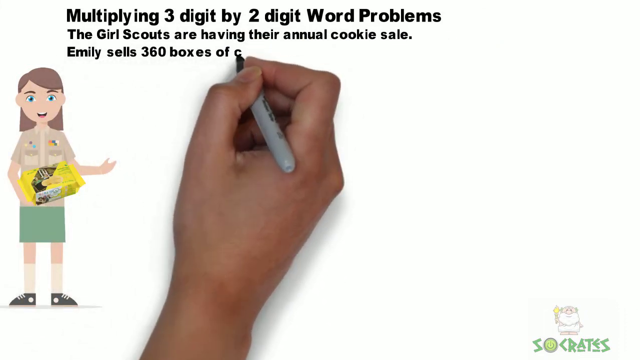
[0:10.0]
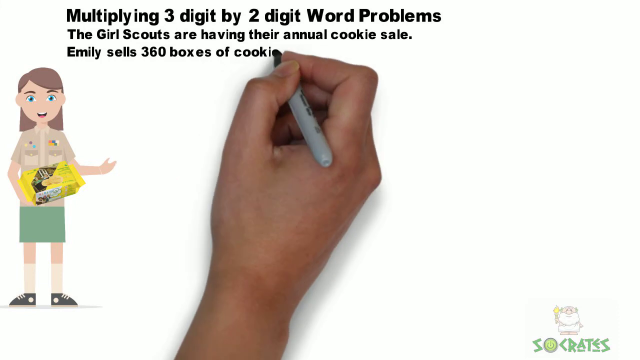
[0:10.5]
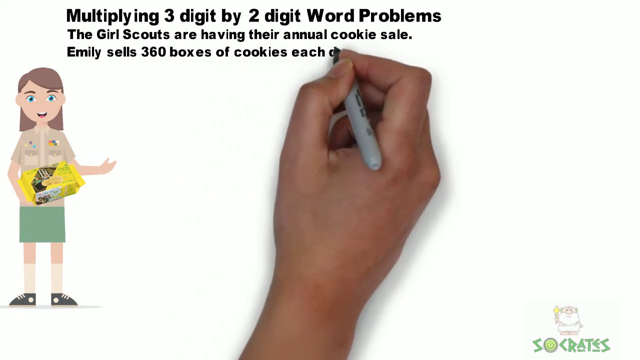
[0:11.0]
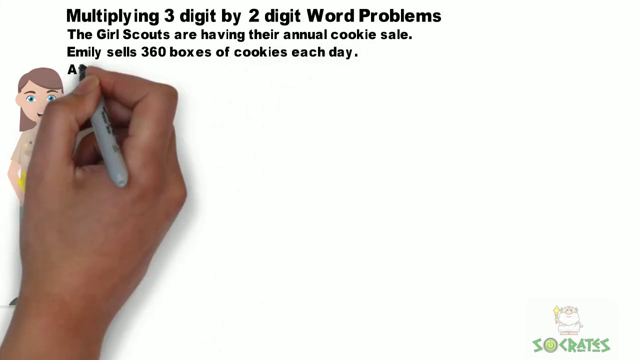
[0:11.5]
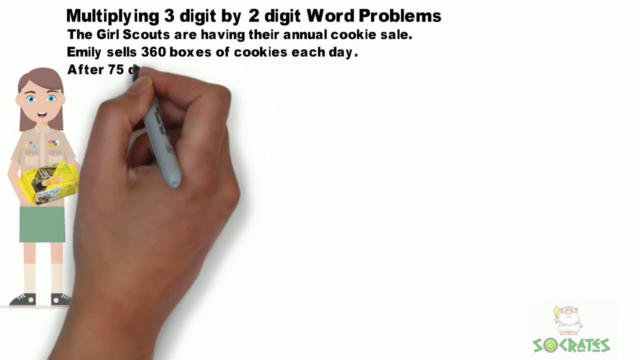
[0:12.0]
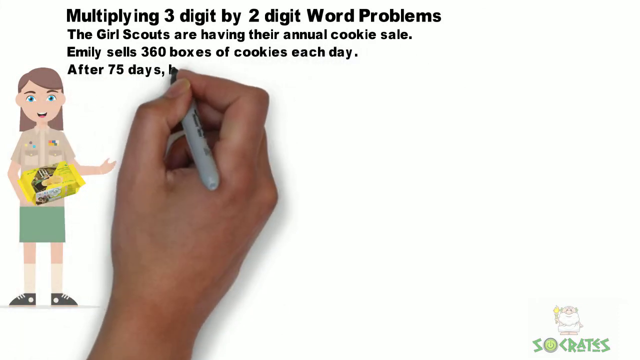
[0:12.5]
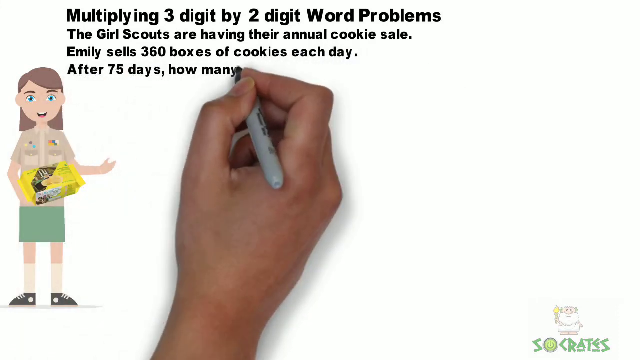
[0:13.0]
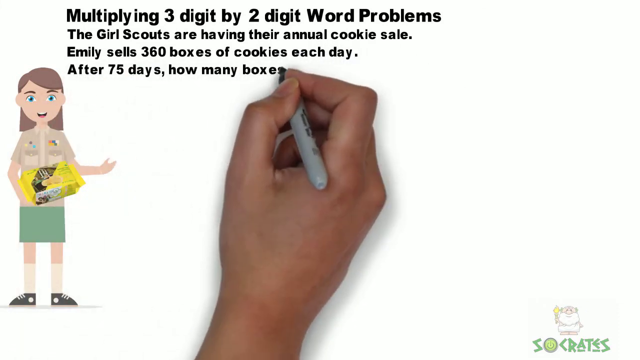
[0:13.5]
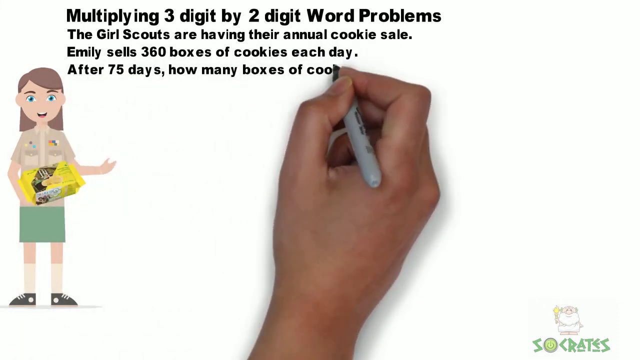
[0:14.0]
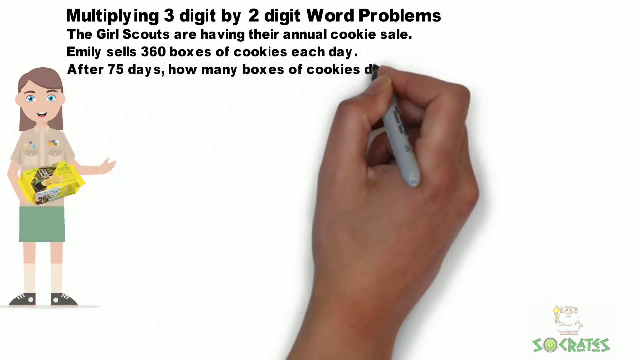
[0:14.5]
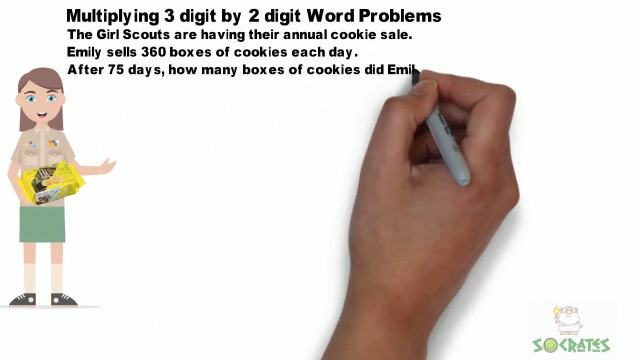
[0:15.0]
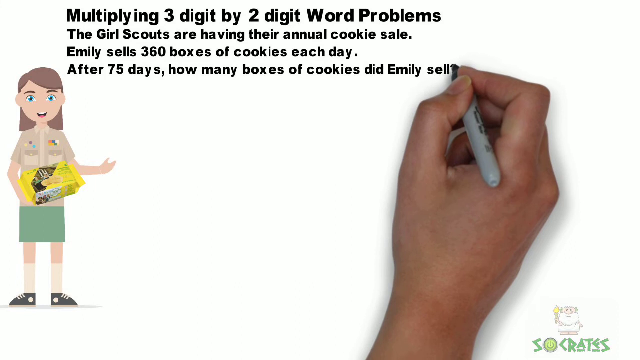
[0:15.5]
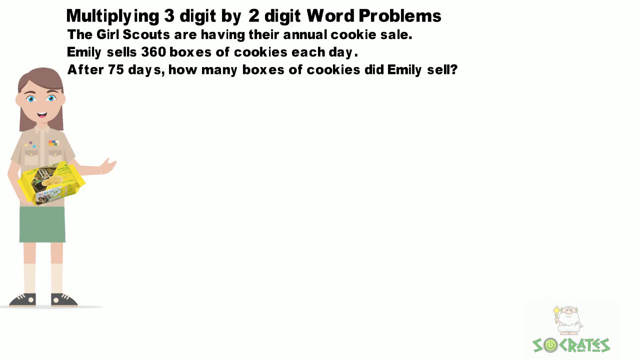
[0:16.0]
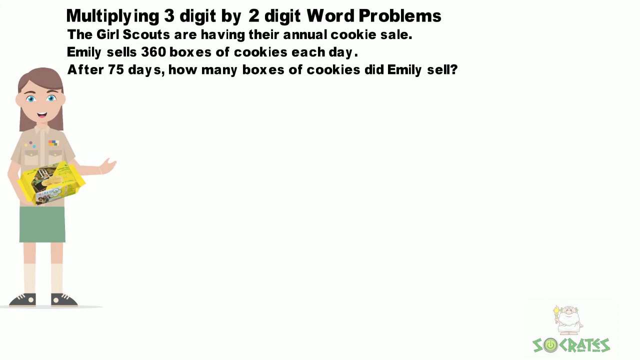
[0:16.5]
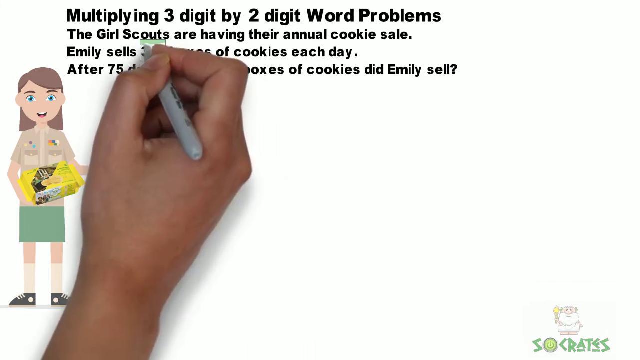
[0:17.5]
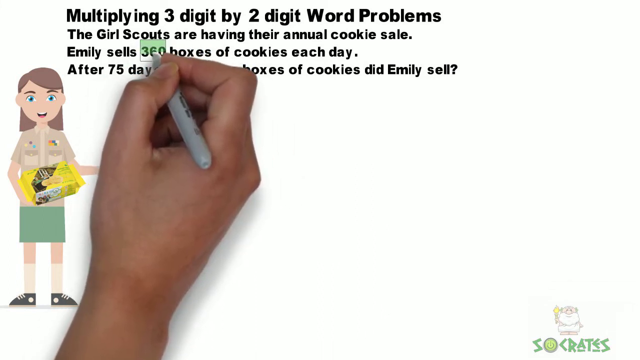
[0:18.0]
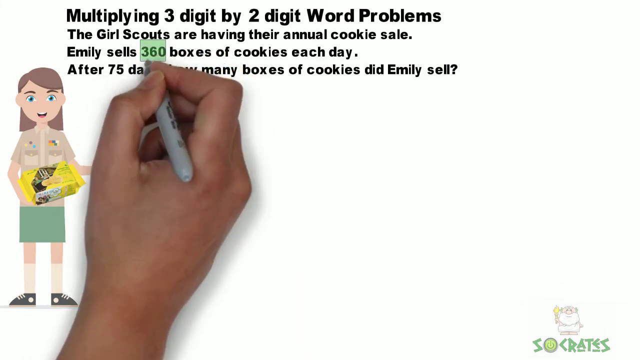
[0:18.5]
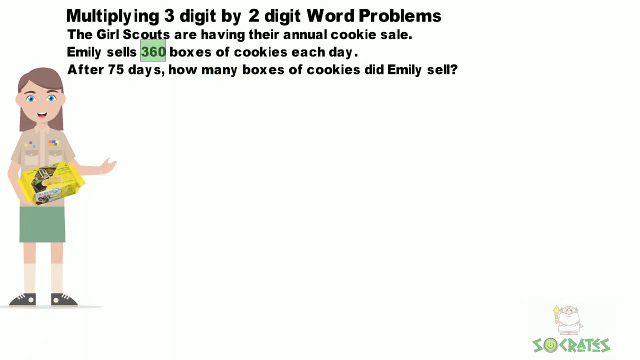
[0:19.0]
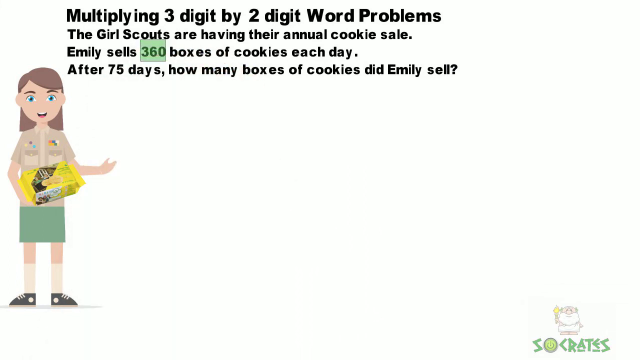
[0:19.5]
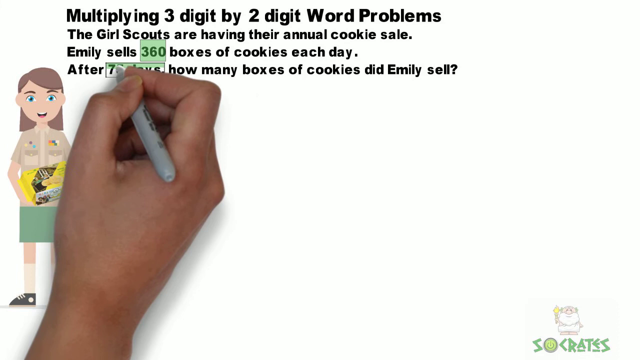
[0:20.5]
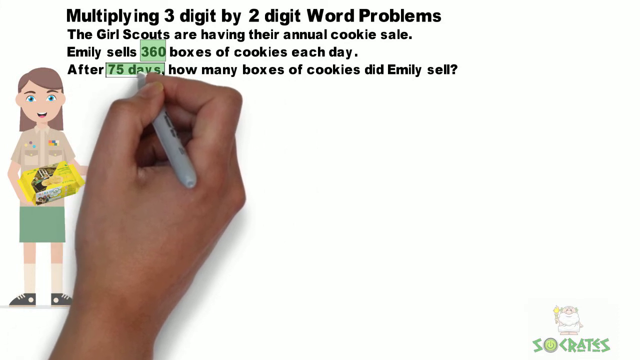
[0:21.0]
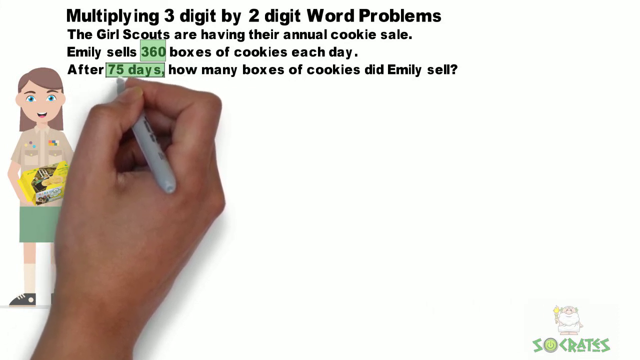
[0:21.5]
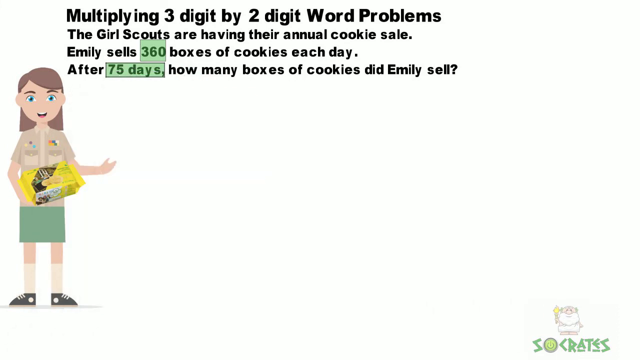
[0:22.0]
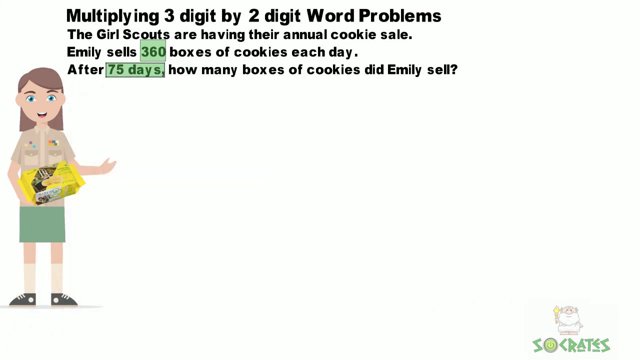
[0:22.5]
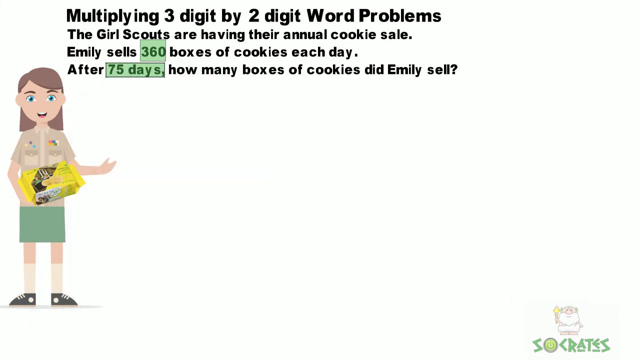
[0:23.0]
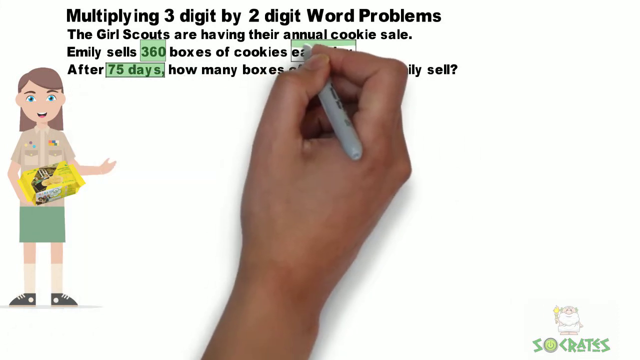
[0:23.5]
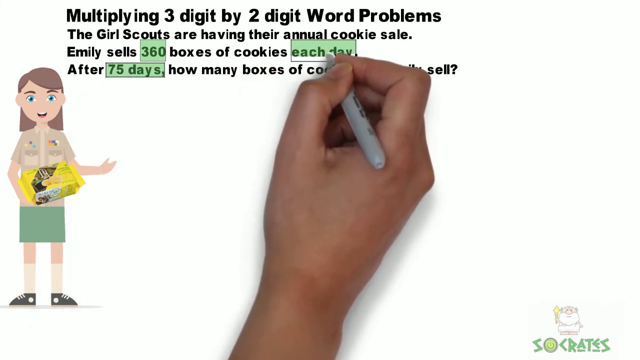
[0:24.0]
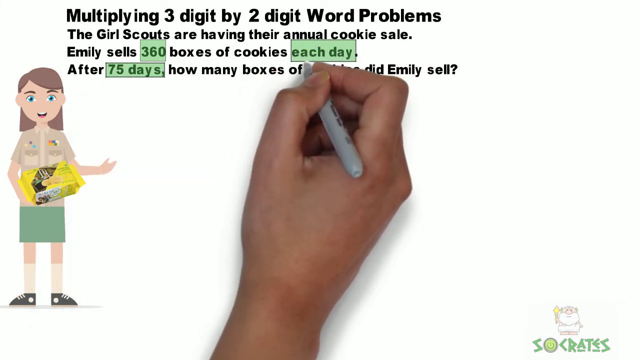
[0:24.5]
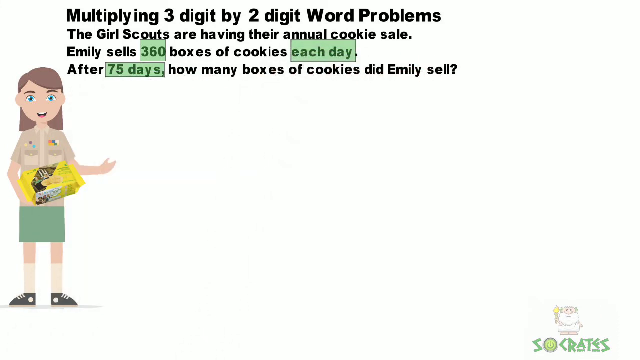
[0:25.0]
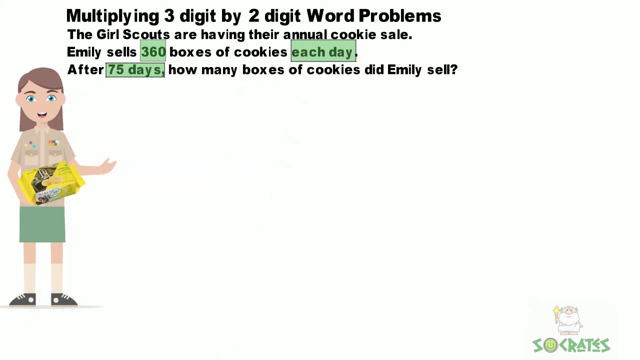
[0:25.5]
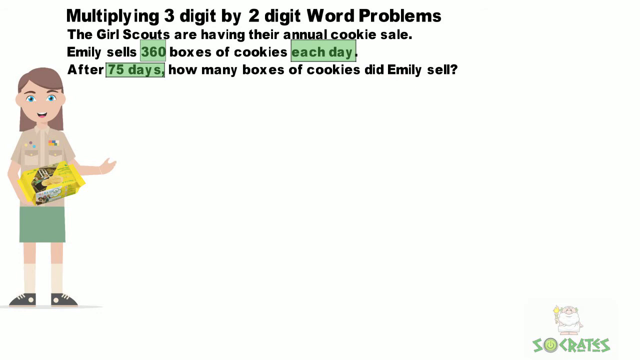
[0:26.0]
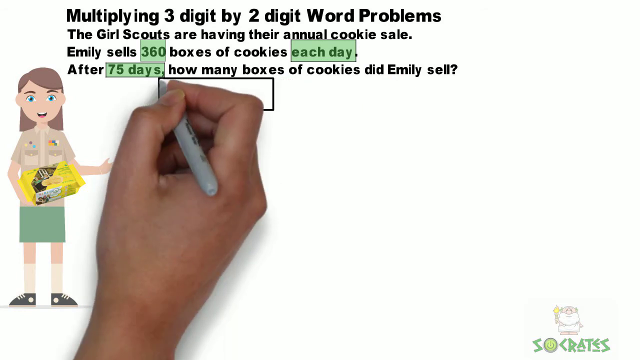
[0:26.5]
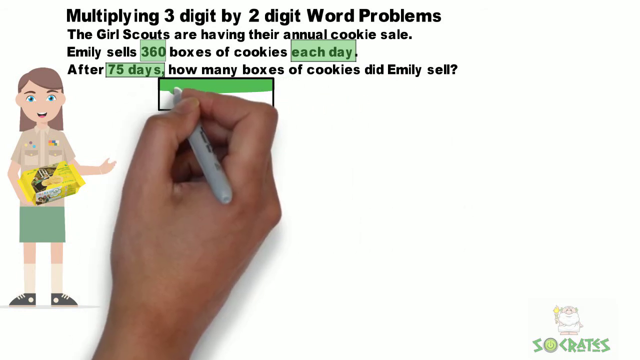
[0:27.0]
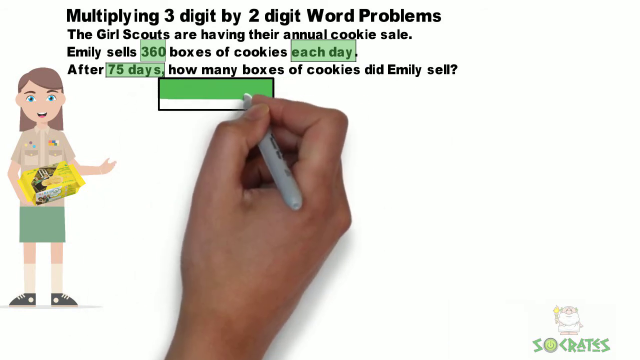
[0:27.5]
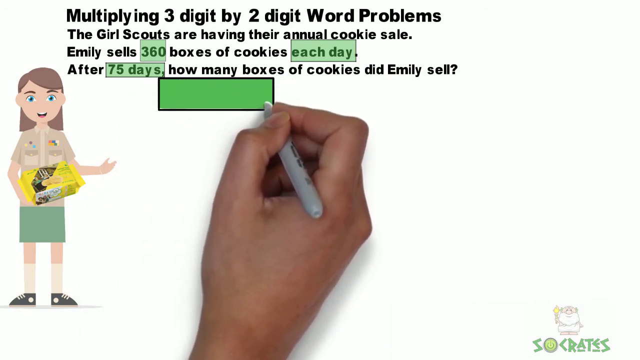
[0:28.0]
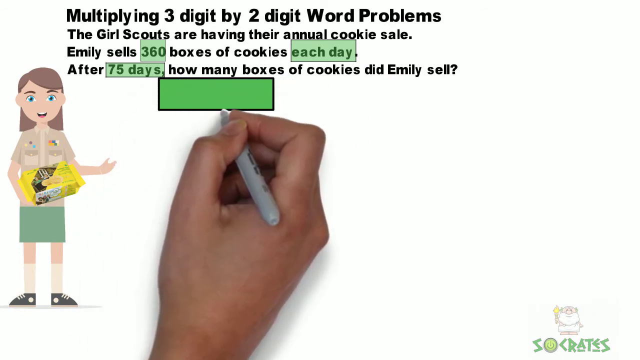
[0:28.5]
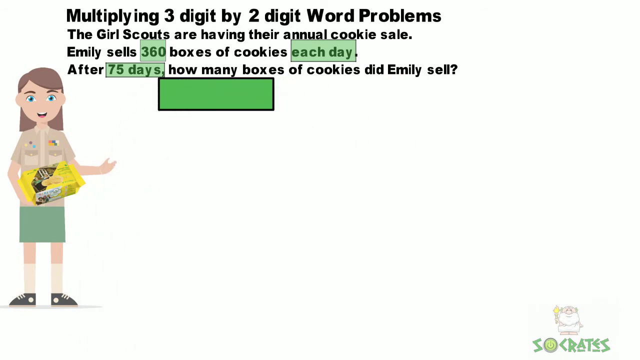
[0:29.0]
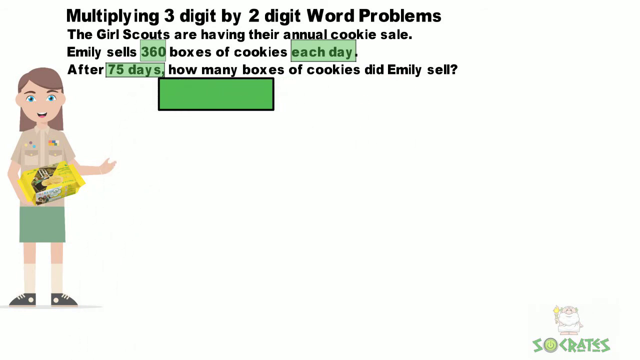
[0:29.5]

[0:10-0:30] A right hand, Caucasian and possibly a woman's, holds a gray Sharpie with a black tip. On the left-hand side of the screen is an animated Girl Scout in the traditional uniform: a green skirt, knee-high socks, black shoes, and a light brown top with some pins and badges on it. She has brown hair and light blue eyes. In her hand she holds what appears to be a box or a bag of Girl Scout cookies. At the top of the slide, text reads "multiplying three-digit by two-digit word problems. The Girl Scouts are having their annual cookie sale. Emily sells 360 boxes a day".